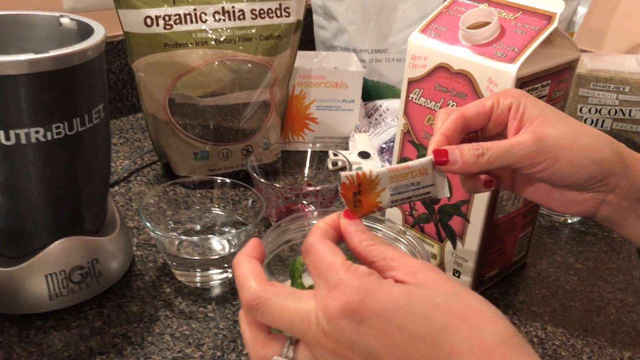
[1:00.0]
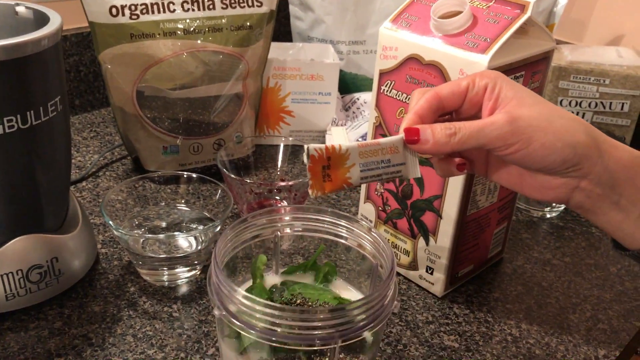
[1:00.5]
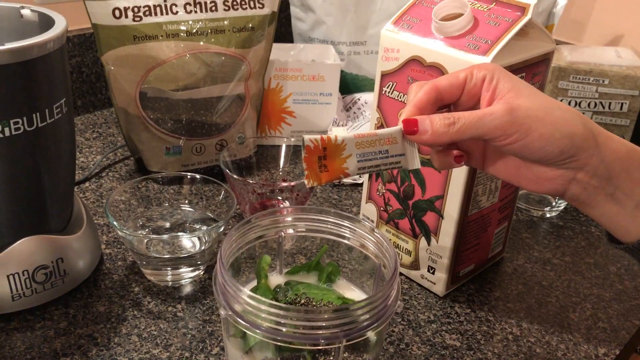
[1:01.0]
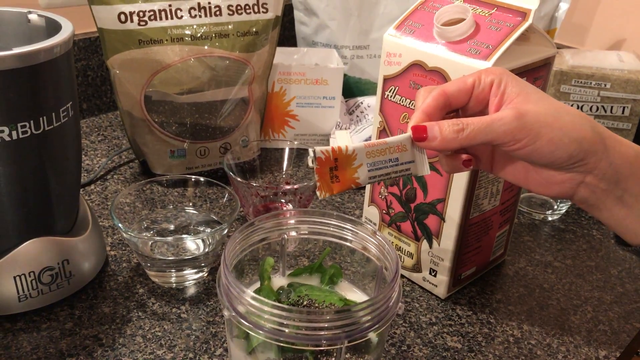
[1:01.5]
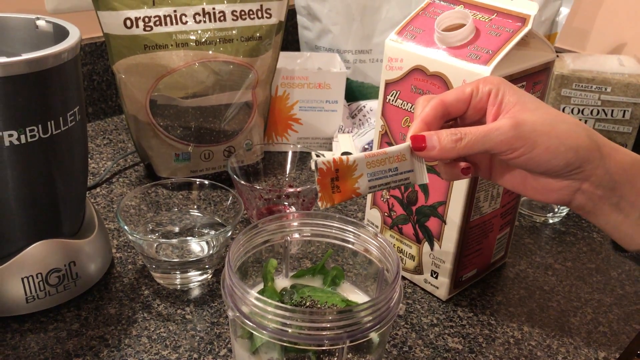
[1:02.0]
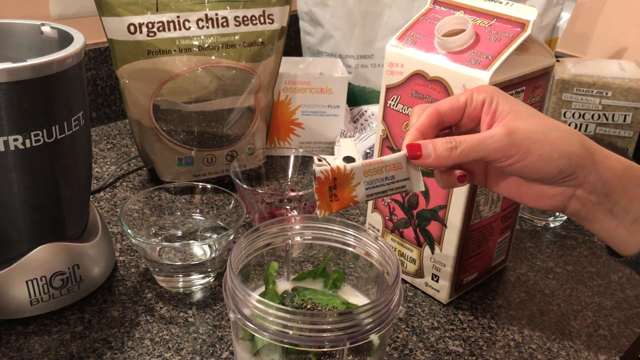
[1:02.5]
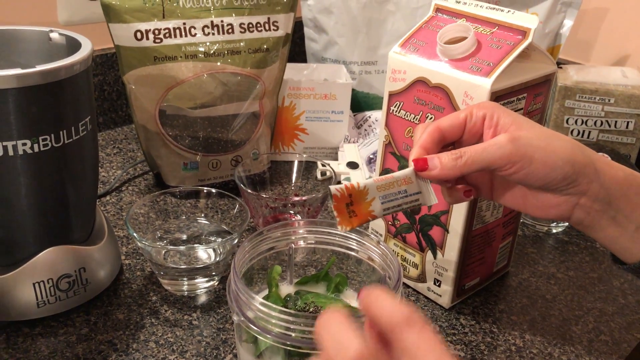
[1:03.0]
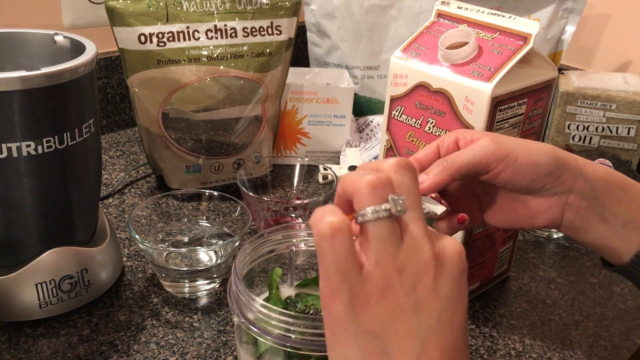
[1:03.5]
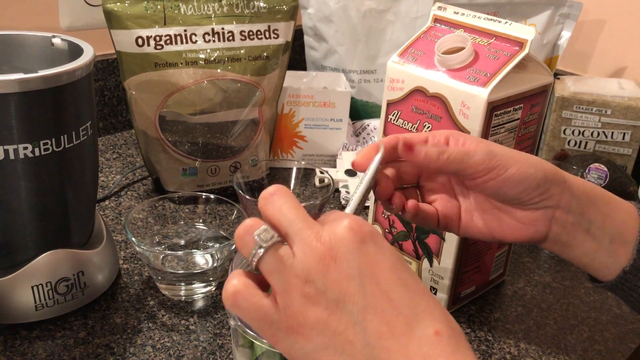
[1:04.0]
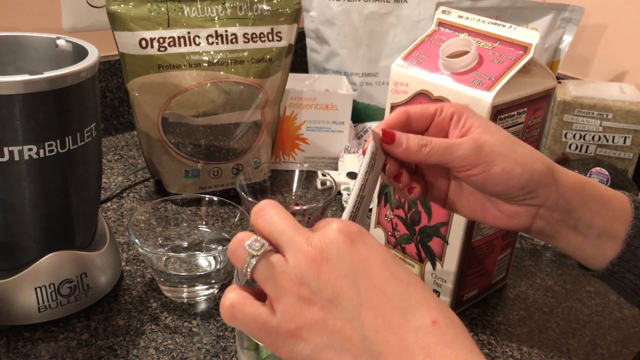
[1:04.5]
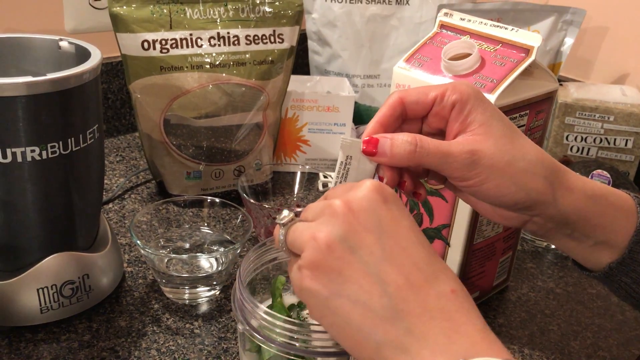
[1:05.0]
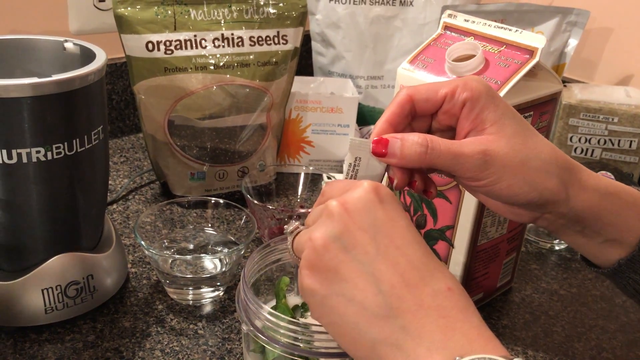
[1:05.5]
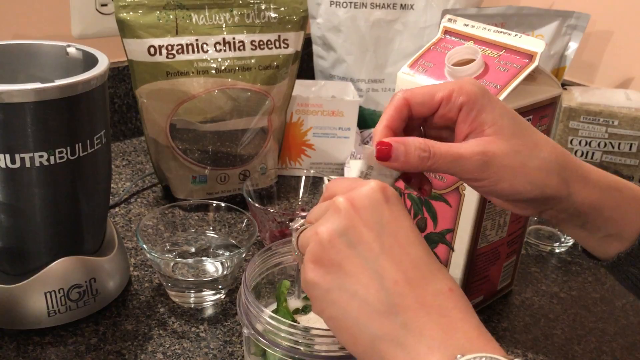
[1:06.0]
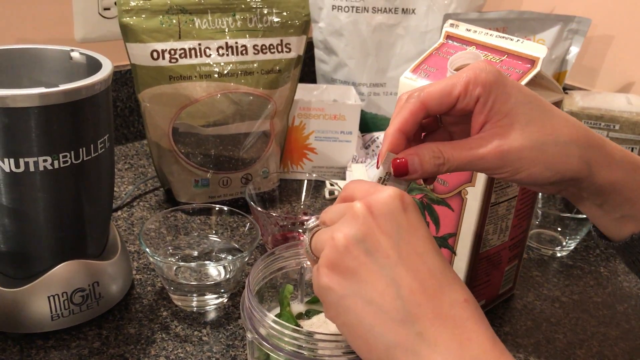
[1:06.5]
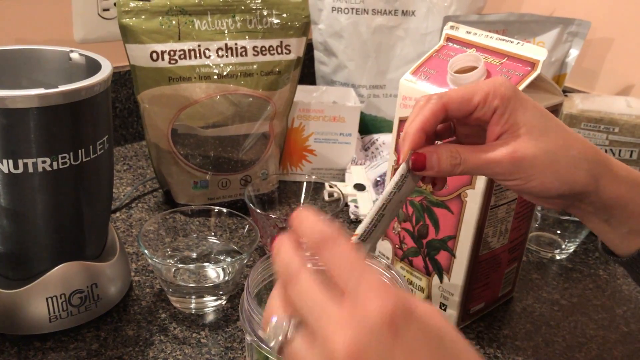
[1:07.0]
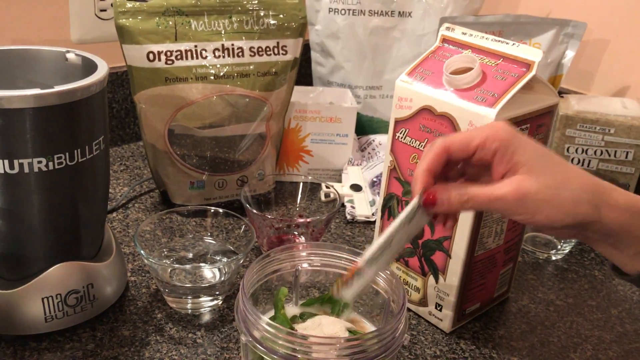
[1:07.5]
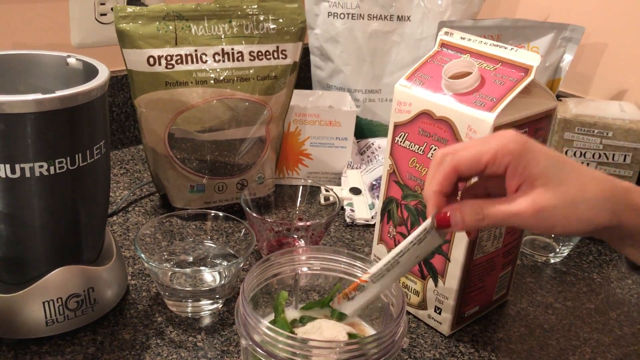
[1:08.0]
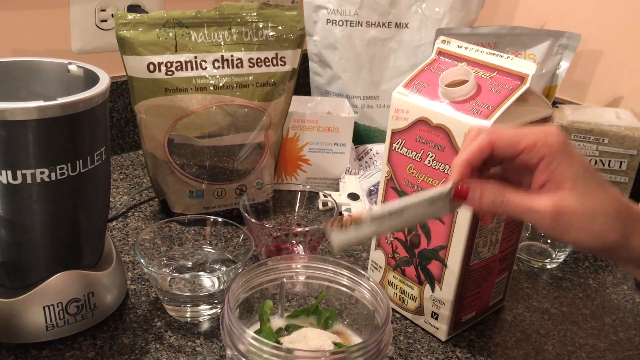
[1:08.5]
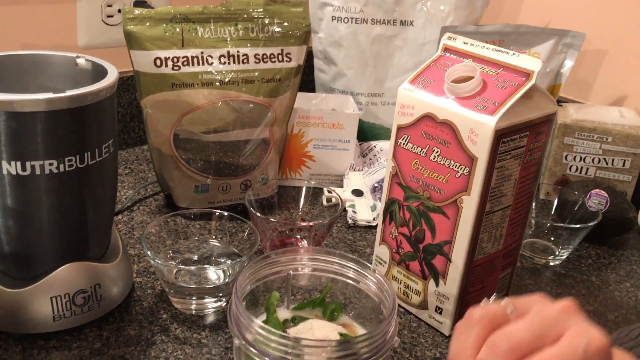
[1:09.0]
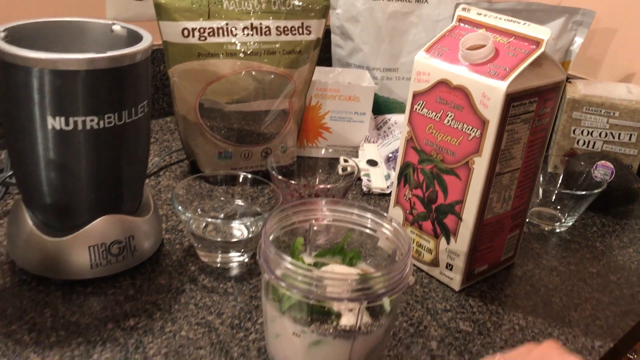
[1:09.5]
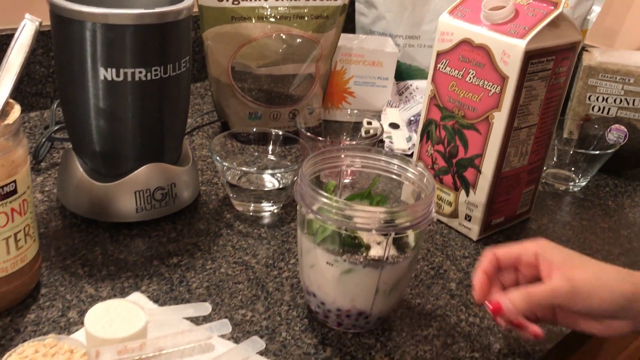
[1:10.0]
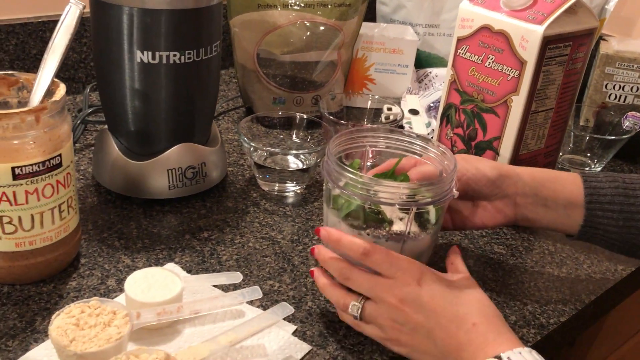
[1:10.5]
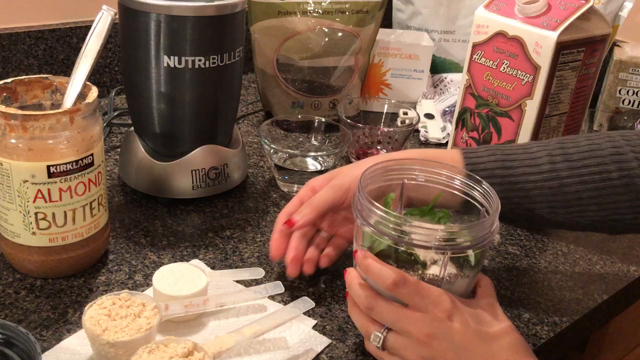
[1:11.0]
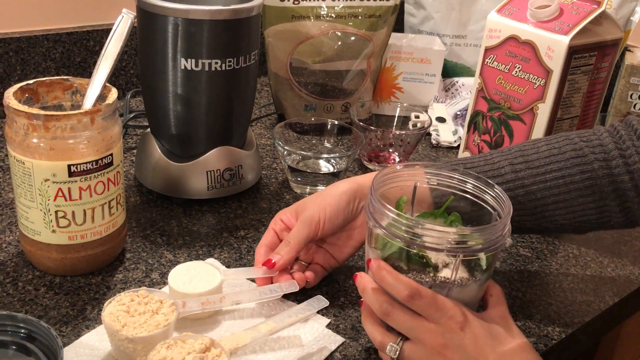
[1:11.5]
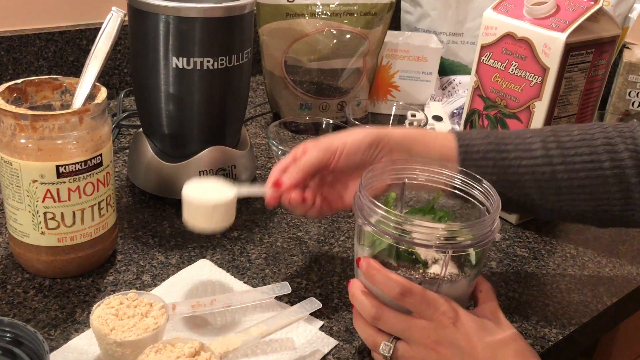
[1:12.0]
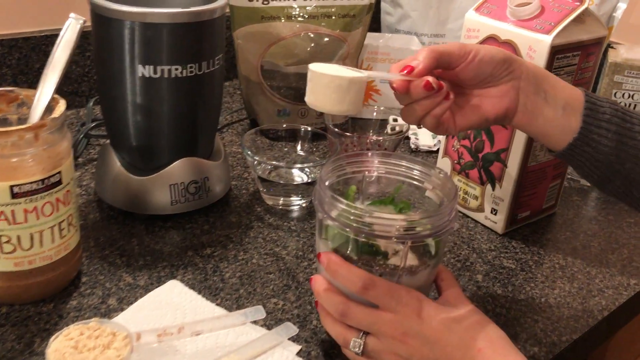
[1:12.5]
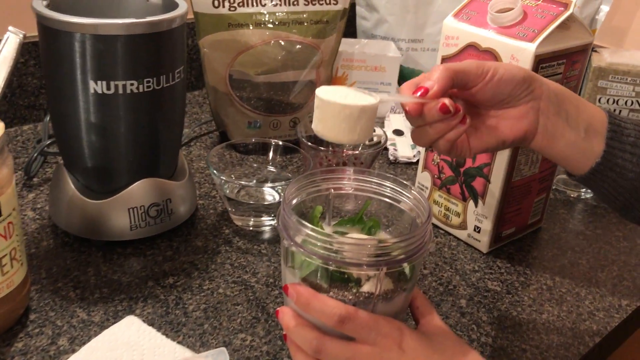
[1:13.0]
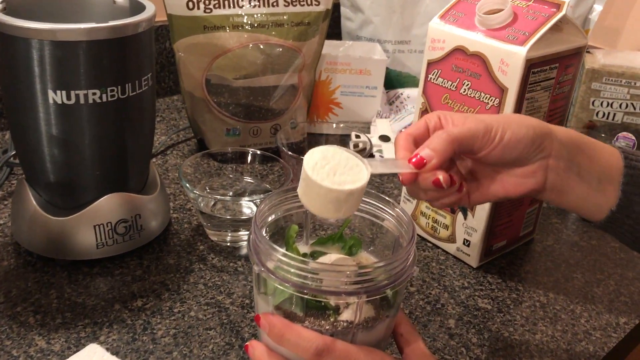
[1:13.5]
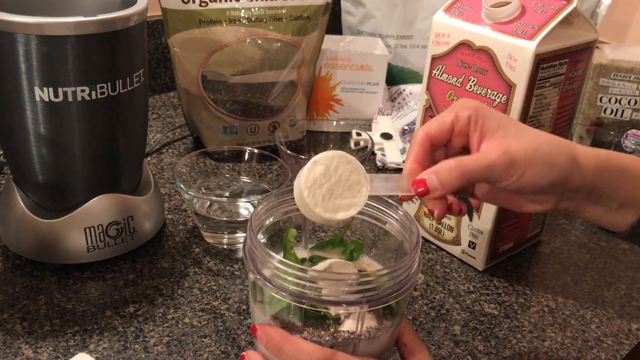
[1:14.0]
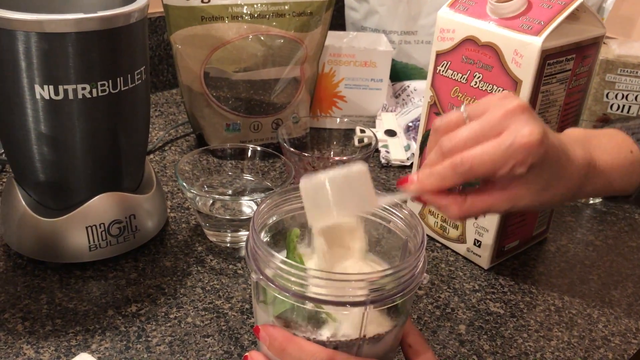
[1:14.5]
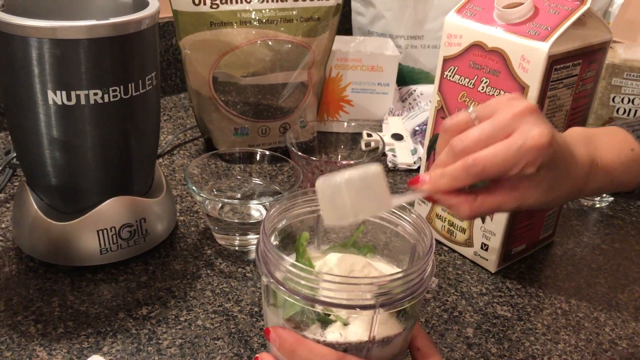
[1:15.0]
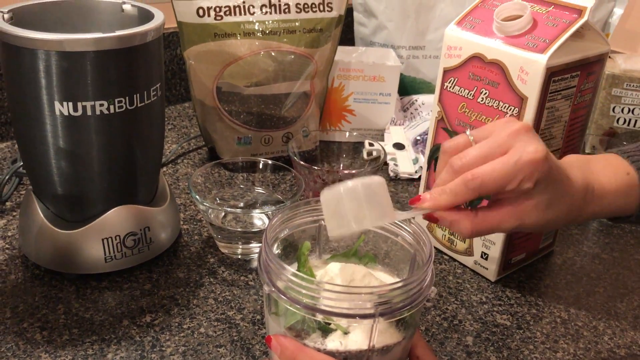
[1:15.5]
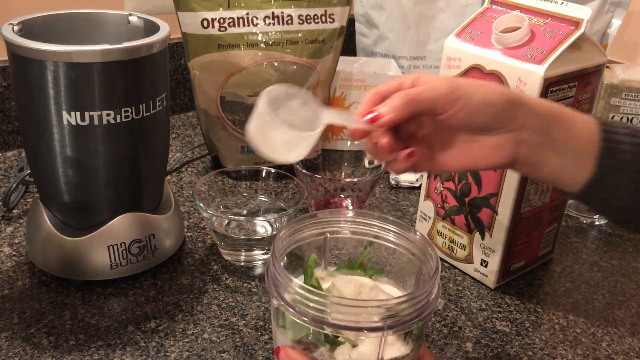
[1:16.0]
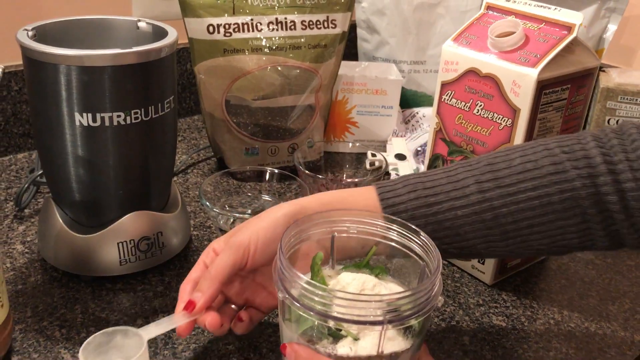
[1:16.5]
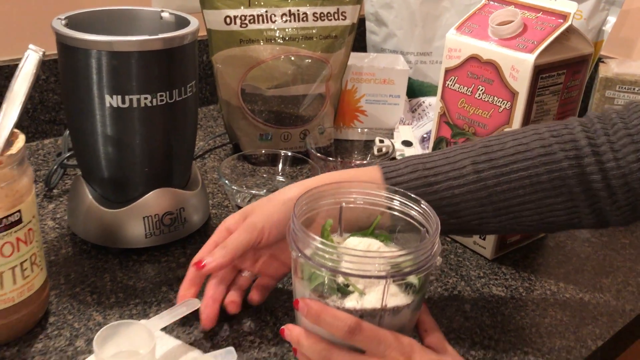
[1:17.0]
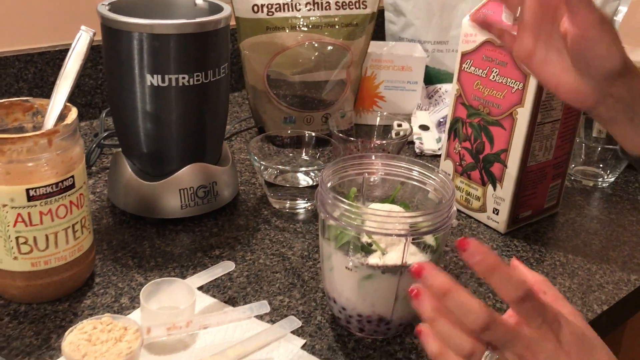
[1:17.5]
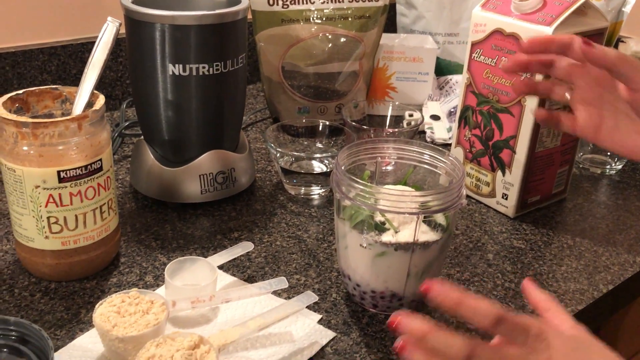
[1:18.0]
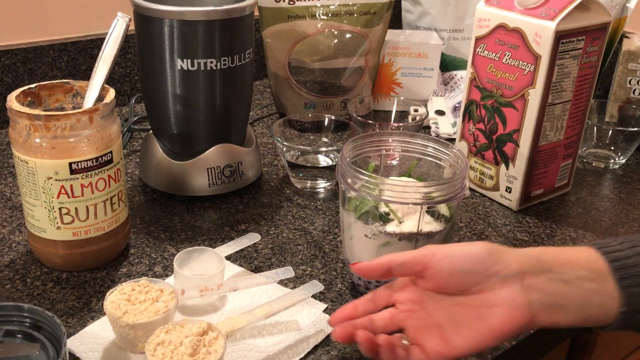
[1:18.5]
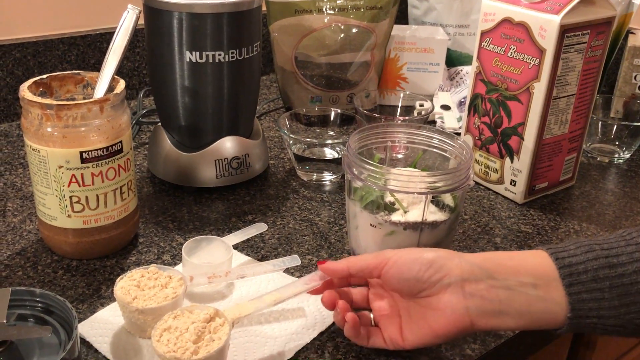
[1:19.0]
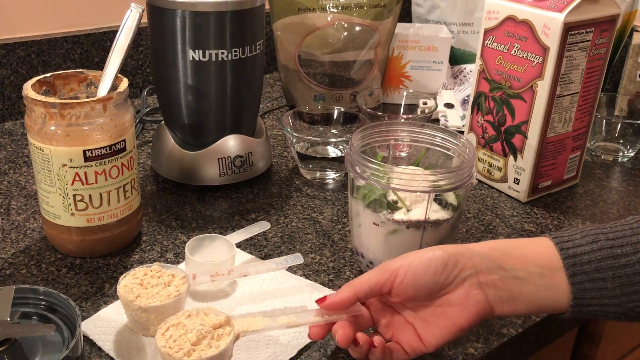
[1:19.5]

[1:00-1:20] The woman keeps adding more ingredients to the glass jar in front of her. The next sachet has orange or brown packaging with letters on it, and its contents are dry and white. She holds the sachet with both hands. After emptying the sachet into the jar, she takes a spoon already measured with something inside and pours it into the jar. She then adds another scoop of an ingredient that looks like flour. In front of her is a bowl that looks like it has some water in it, the only small bowl that still has something in it.